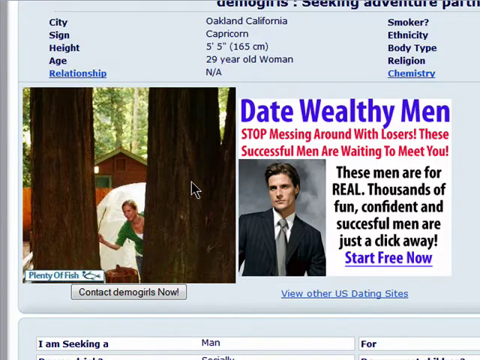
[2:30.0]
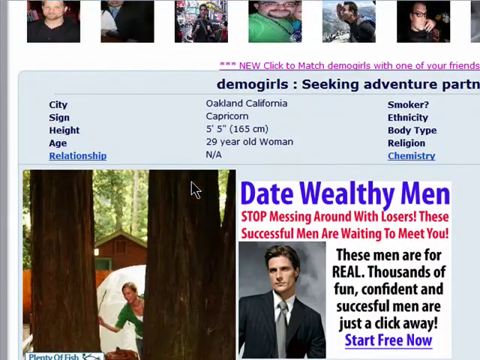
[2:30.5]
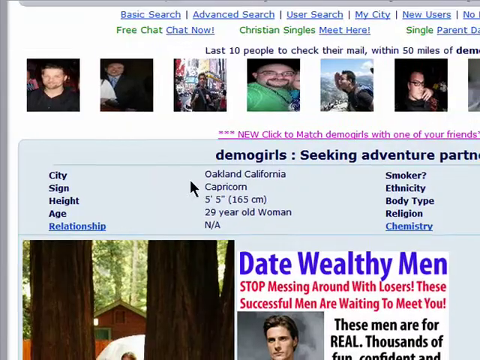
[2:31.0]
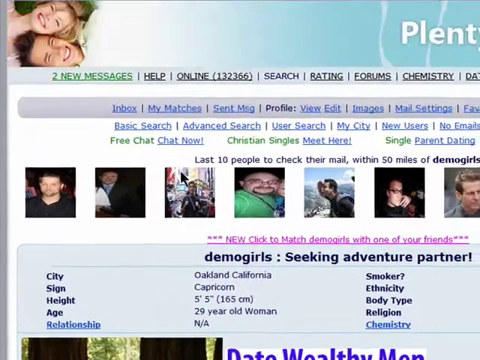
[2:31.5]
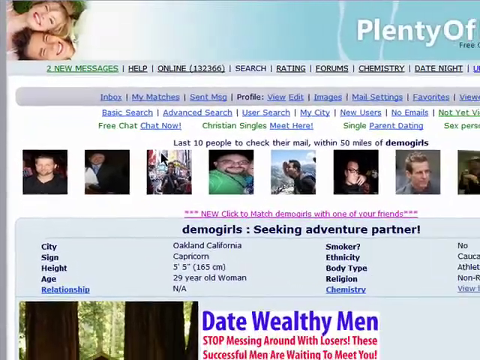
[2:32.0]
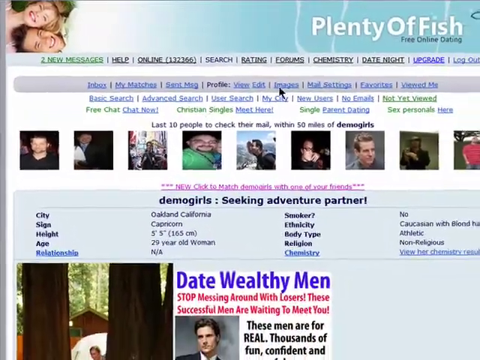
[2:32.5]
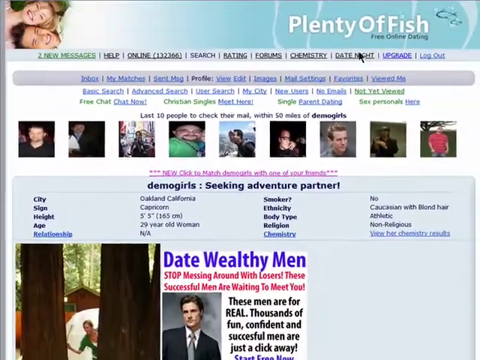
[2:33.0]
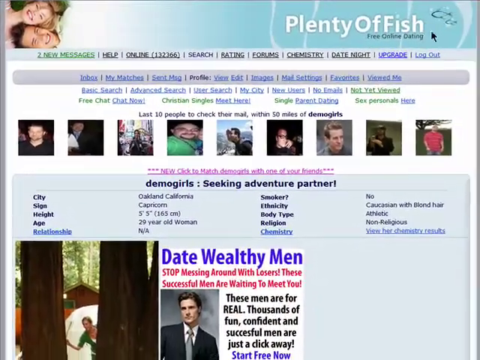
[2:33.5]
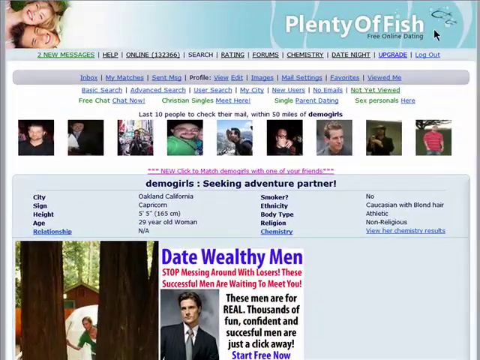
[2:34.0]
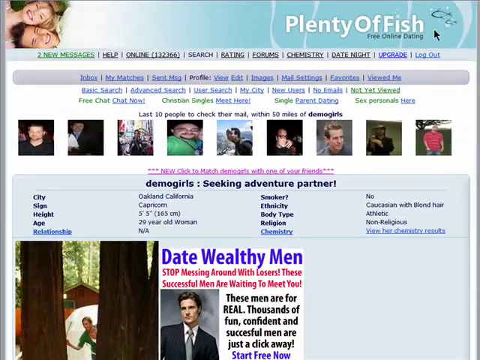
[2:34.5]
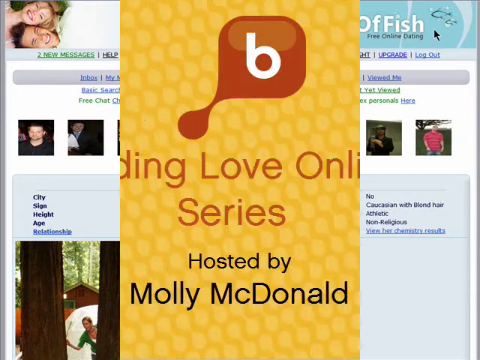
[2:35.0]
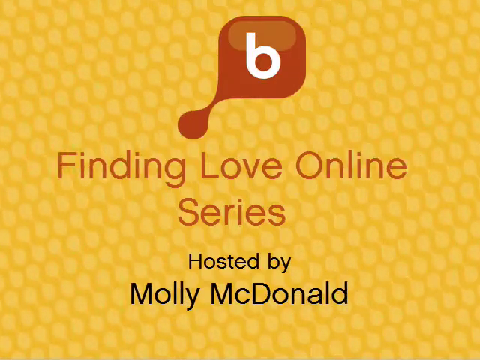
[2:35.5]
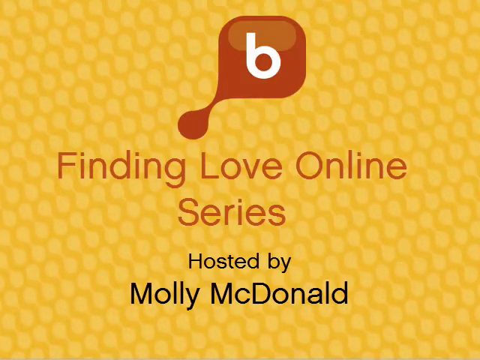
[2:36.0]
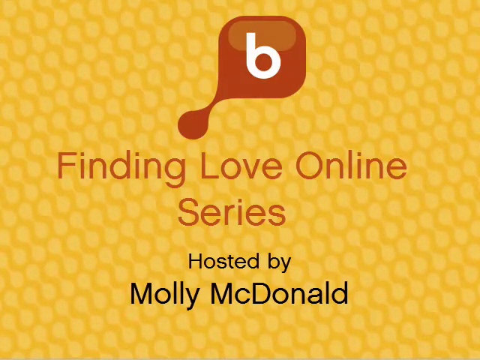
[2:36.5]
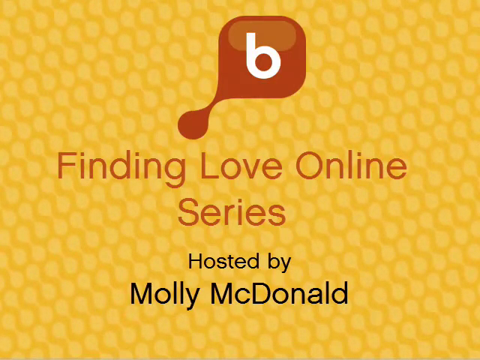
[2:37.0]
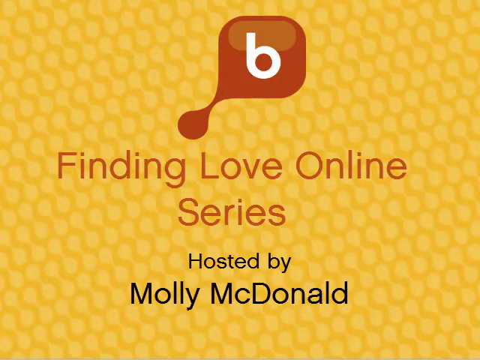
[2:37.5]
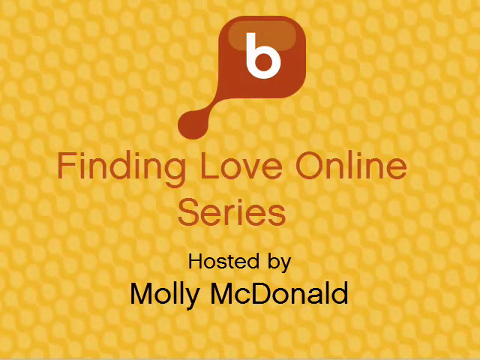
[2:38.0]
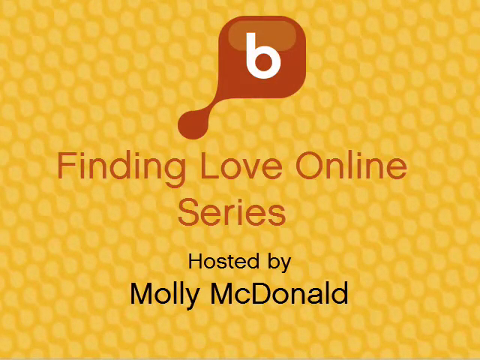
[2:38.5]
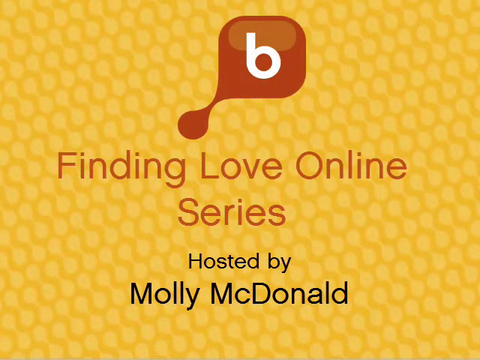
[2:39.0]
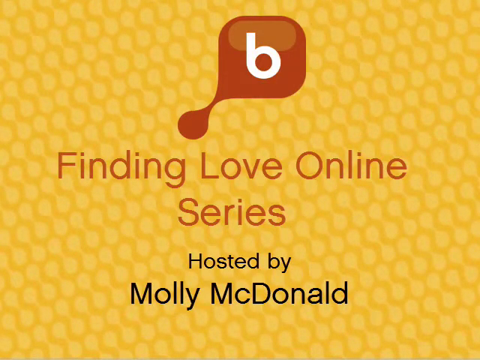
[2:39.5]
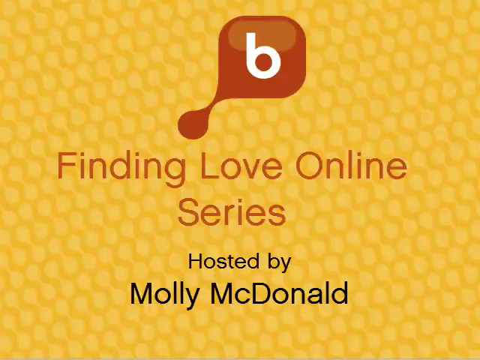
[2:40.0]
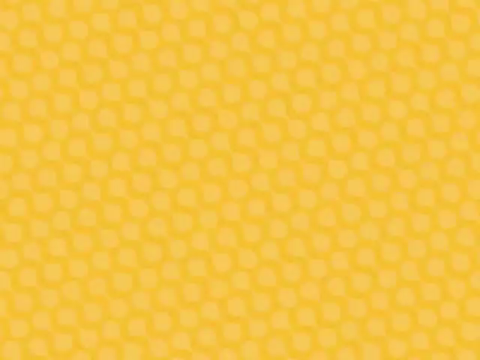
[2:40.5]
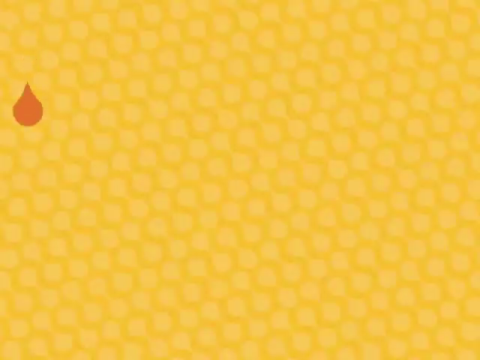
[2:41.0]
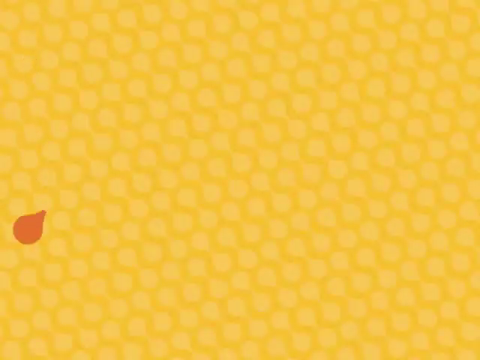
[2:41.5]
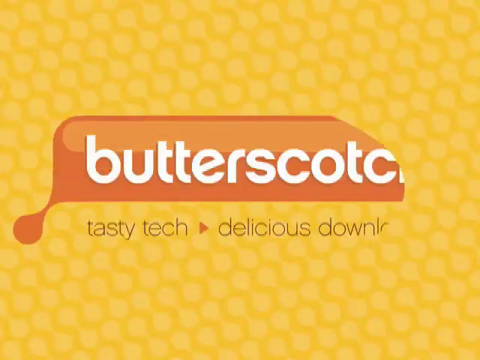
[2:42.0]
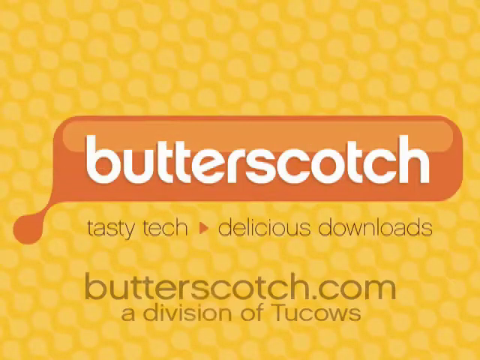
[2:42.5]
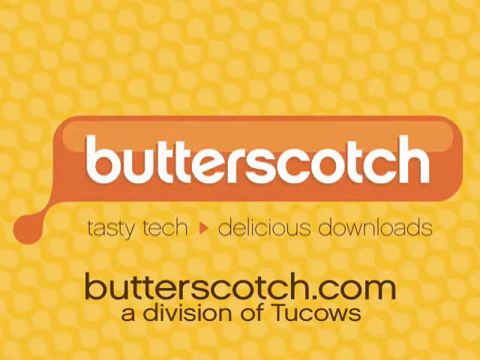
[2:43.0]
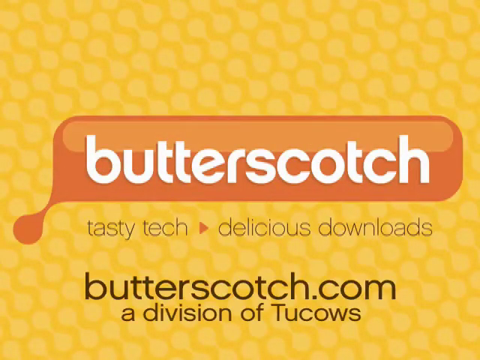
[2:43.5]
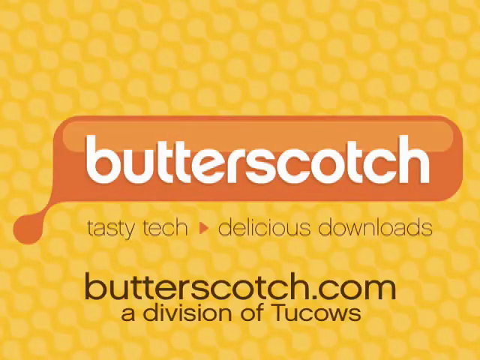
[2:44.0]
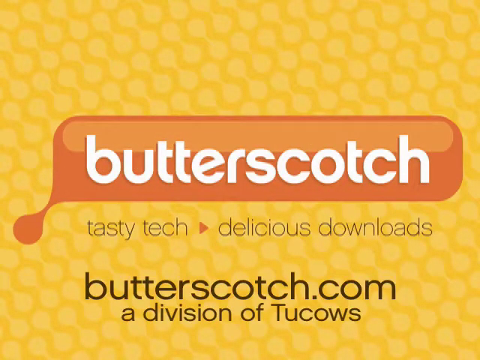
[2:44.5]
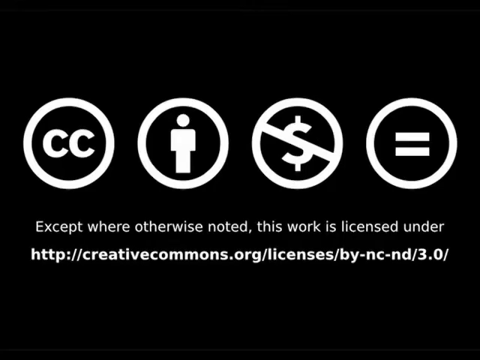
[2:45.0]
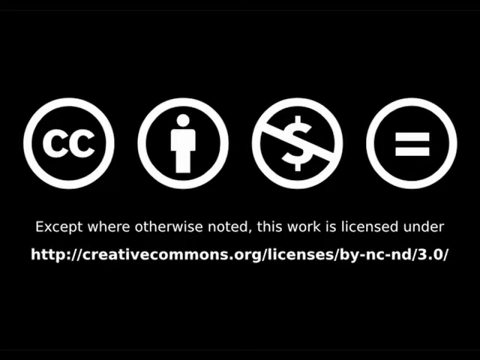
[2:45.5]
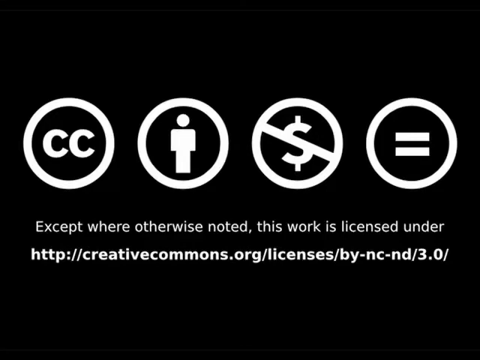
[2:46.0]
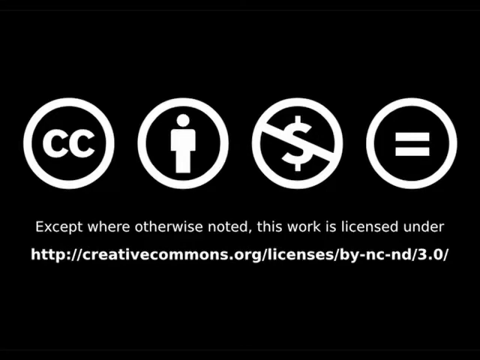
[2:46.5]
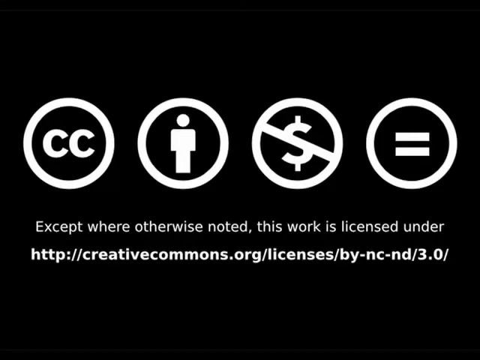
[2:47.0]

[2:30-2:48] Part of a dating profile is shown, focused on two pictures. The one on the left shows a woman with a barn in the background; the one on the right has a title reading "Date Wealthy Men", an option to "start free now", and a man in a suit on the lower left. Above and below the images are sections with demographic information. The screen scrolls up and then zooms out to show the rest of the profile, with a title bar reading "plenty of fish". A black arrow cursor, initially over the picture on the left, moves up to the title bar. A new screen begins in the center and covers the old one, moving from the center out toward both sides. It has a yellow background with an hourglass-like pattern and a logo at the top: a red box with a bee in it. Underneath, the title reads "Finding Love Online Series, hosted by Molly MacDonald". After a few seconds the text clears, and an orange drop drops down from the left-hand side, stops about a third of the way from the bottom and expands outward into a rectangle reading "butterscotch". Text then appears underneath reading "a tasty tech, delicious downloads".